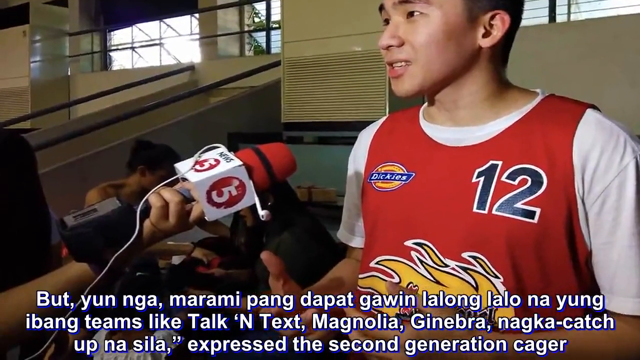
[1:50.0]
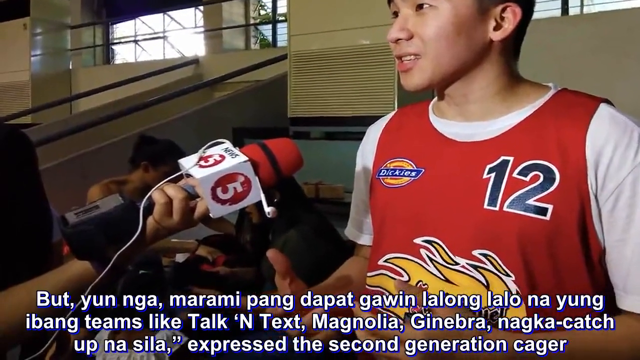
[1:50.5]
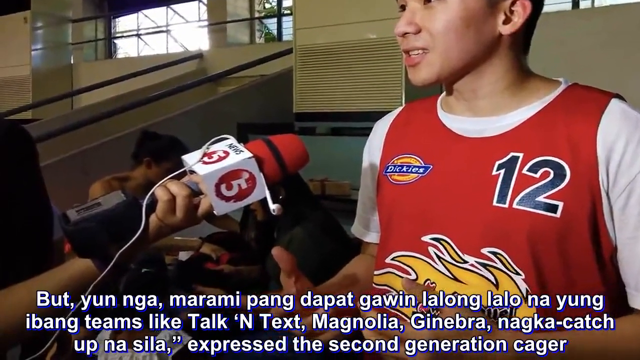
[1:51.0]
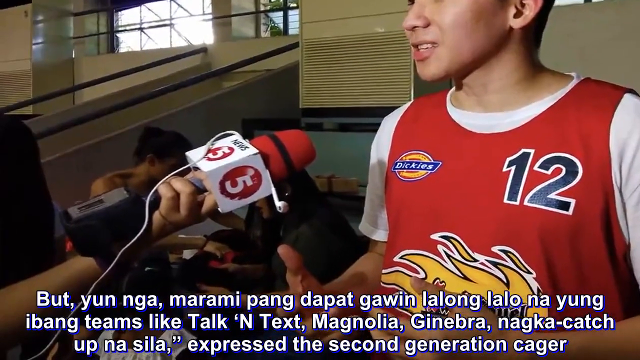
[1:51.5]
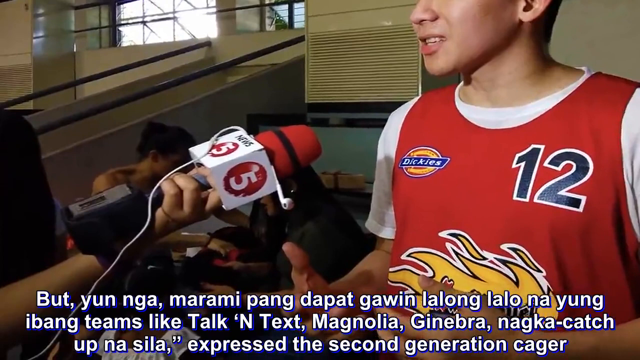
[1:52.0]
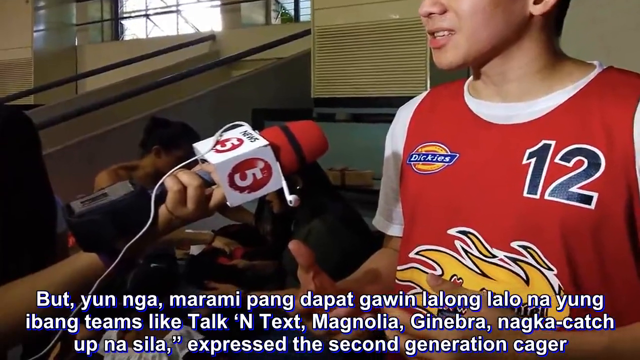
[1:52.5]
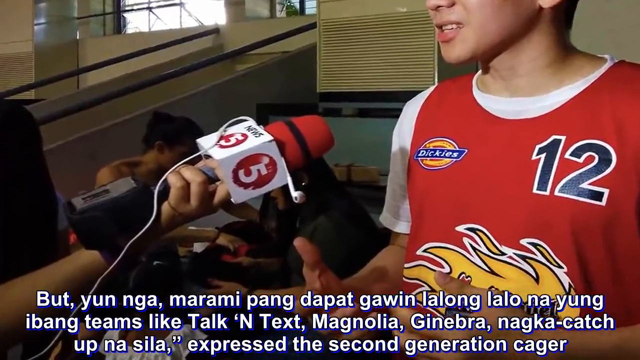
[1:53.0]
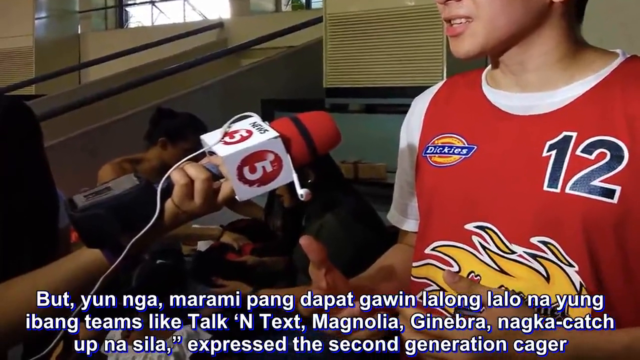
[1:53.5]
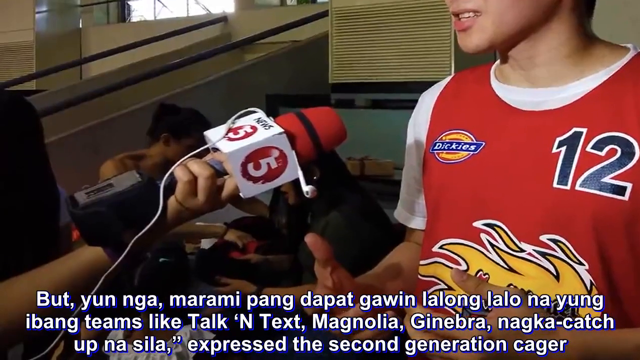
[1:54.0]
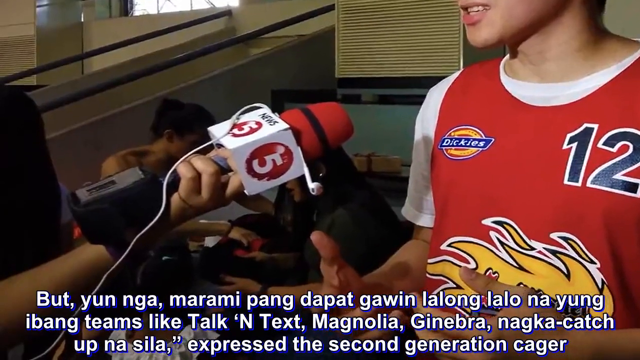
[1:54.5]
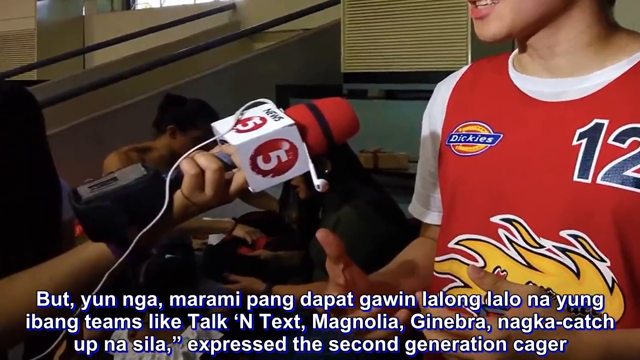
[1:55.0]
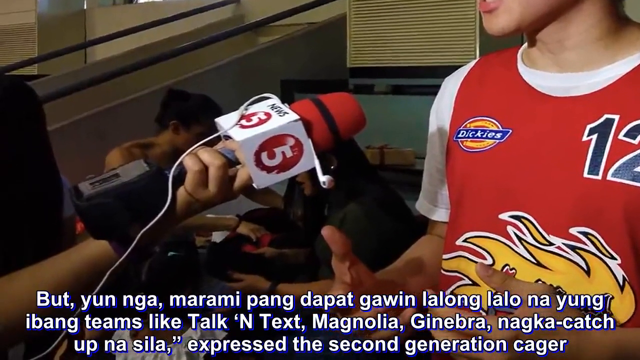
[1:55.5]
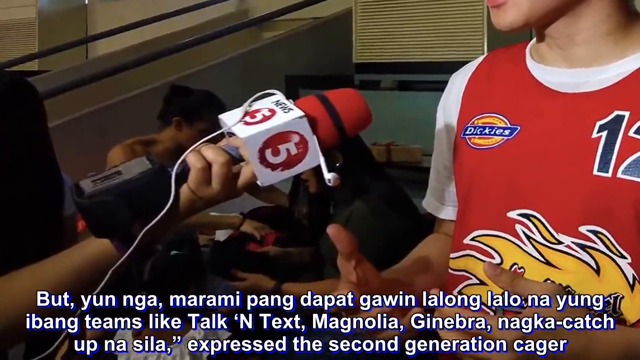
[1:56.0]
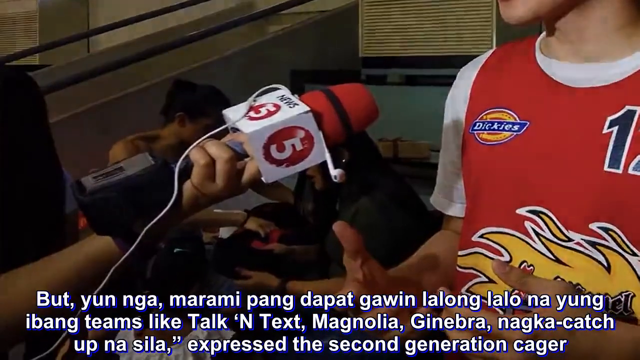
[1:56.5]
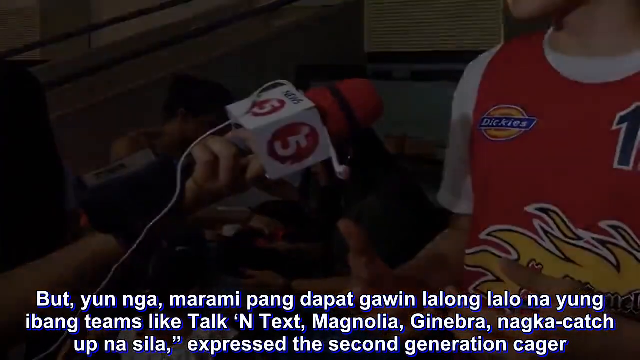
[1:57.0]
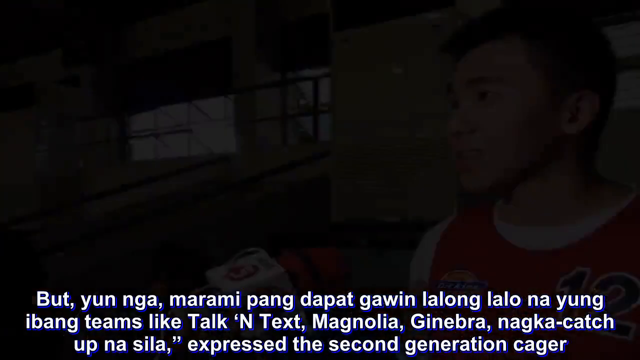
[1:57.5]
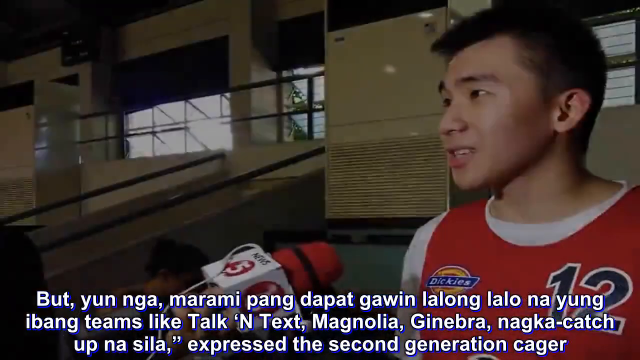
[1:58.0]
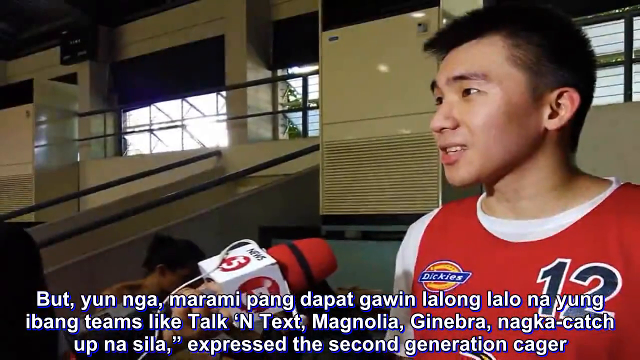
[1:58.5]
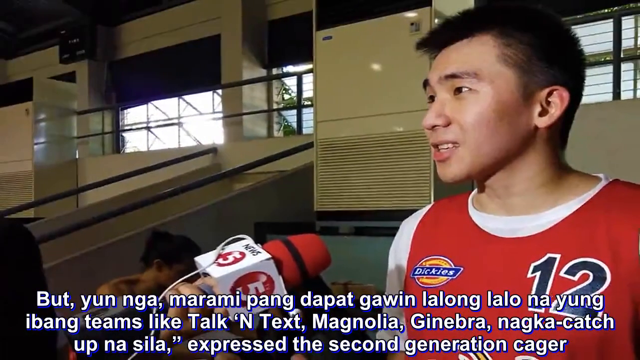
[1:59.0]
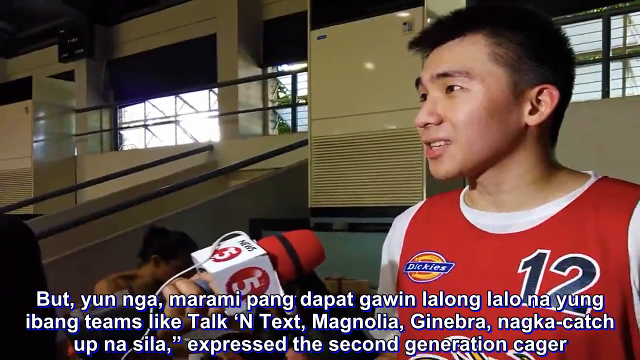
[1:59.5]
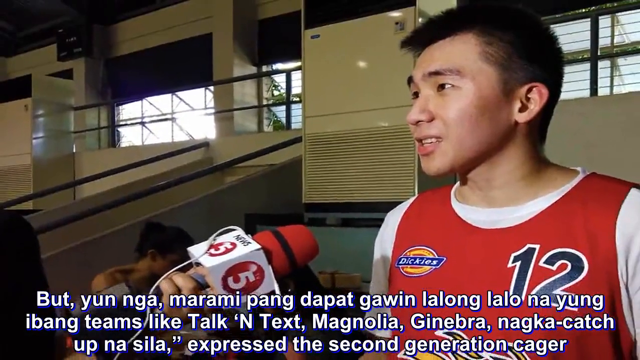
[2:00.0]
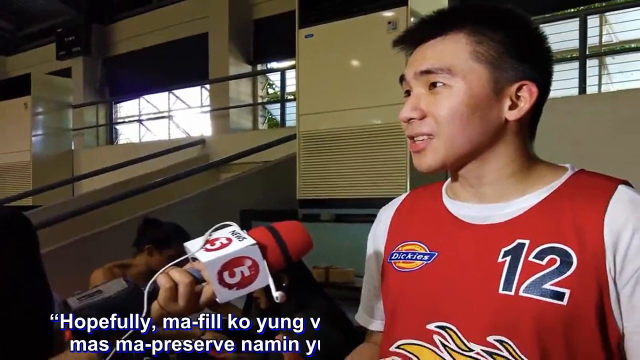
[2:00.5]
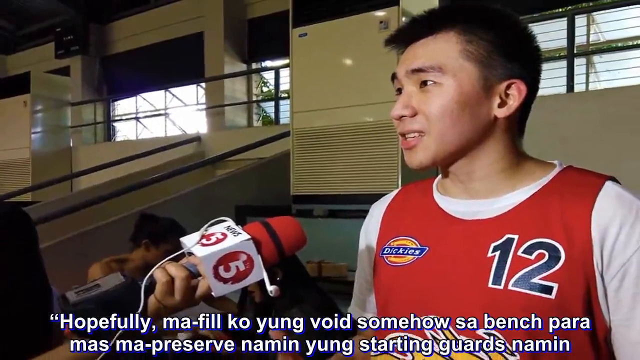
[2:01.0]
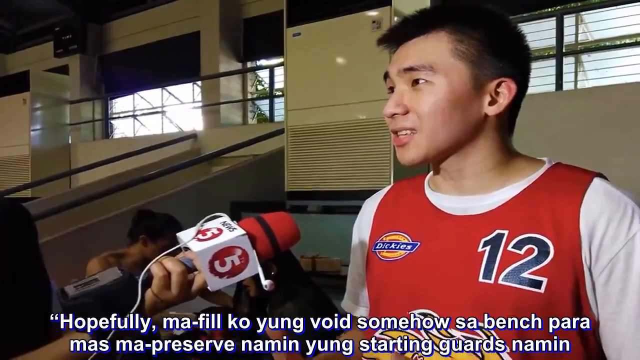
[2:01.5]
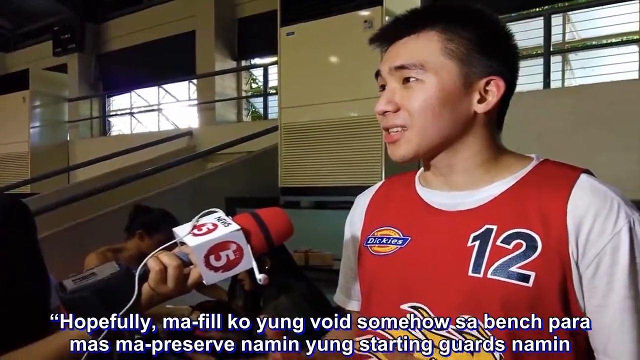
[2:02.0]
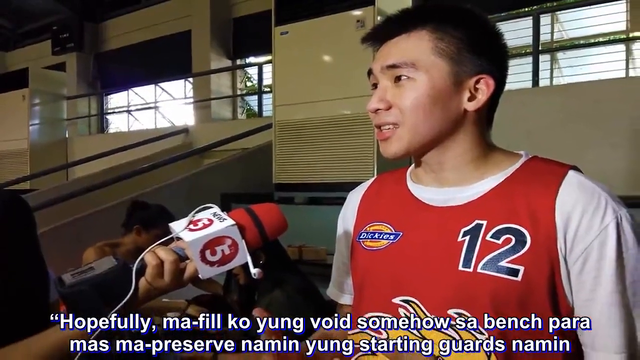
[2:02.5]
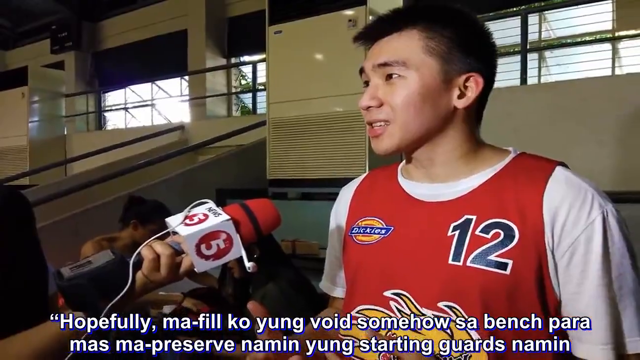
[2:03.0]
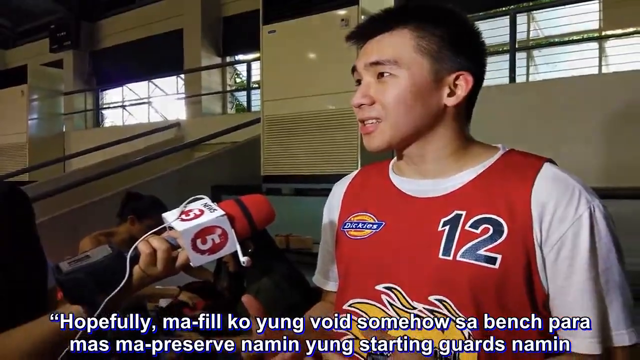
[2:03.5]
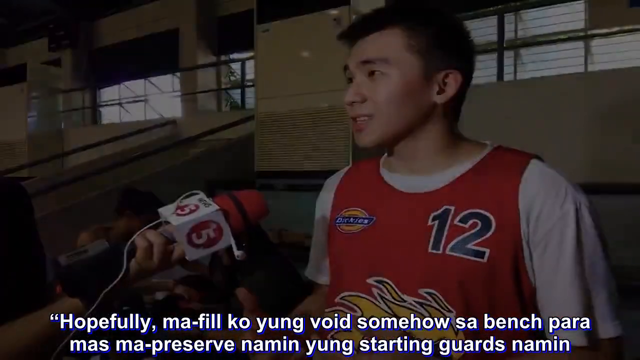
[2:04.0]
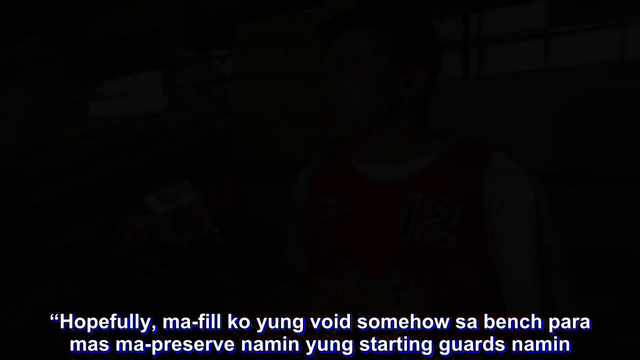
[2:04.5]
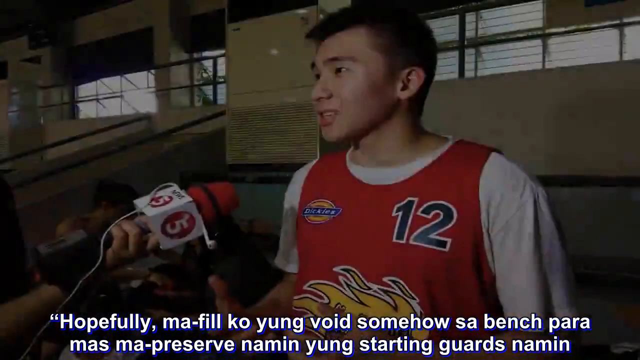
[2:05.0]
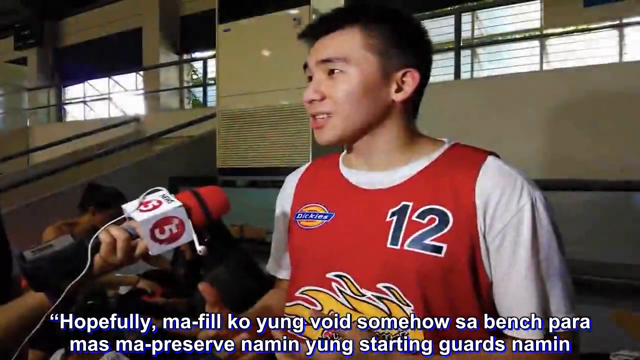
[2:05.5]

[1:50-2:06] In the same location, a basketball player of Asian descent, in his 30s, with short black hair, is on the right side, looking to the left toward reporters off camera. His red jersey has the number 12 at the top left of the chest, a small Dickies logo at the top right, and what appears to be some type of flame logo on the belly. His hands are raised in front of him near his belly. At the bottom left, a woman's arm comes into view holding a microphone with a red top; beneath the red top is a small white box with the word "news" in black and the number five underneath. The woman has some type of black box-shaped electronic device attached to her wrist. White subtitles appear at the bottom middle in Filipino or another foreign language. The camera zooms in at the bottom left, where two women sit in the background behind the microphone. The screen flashes, then shows the stage zooming outward as the subtitles at the bottom change.